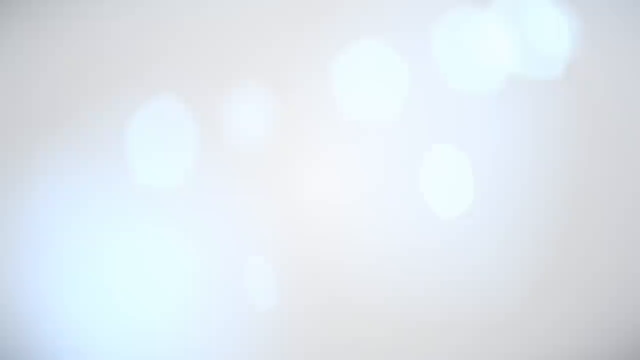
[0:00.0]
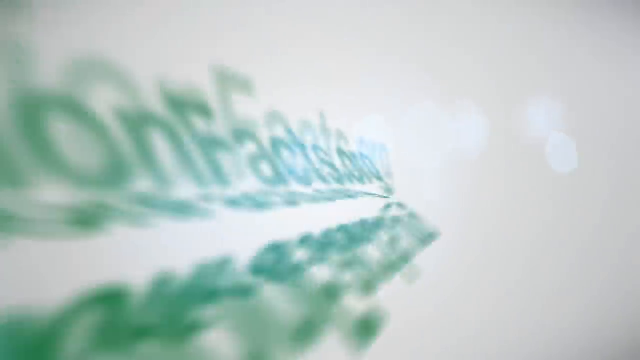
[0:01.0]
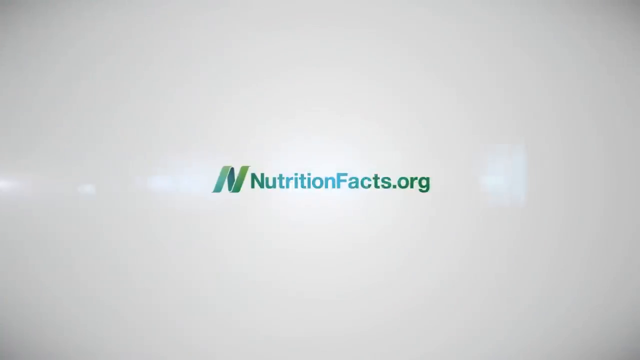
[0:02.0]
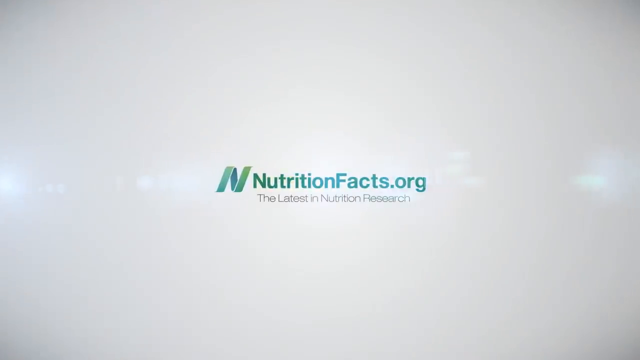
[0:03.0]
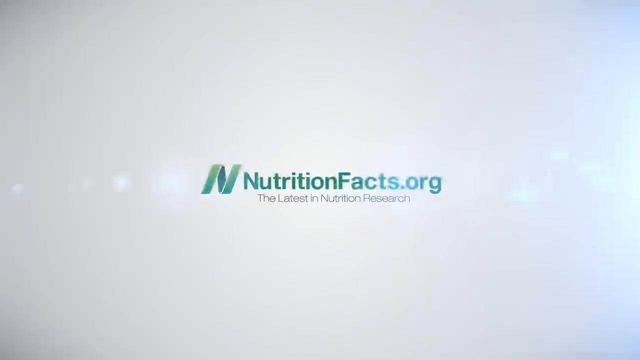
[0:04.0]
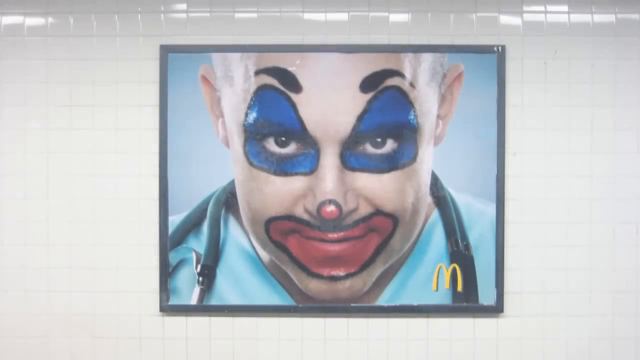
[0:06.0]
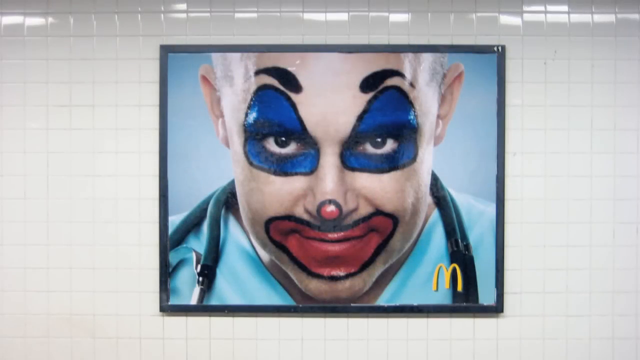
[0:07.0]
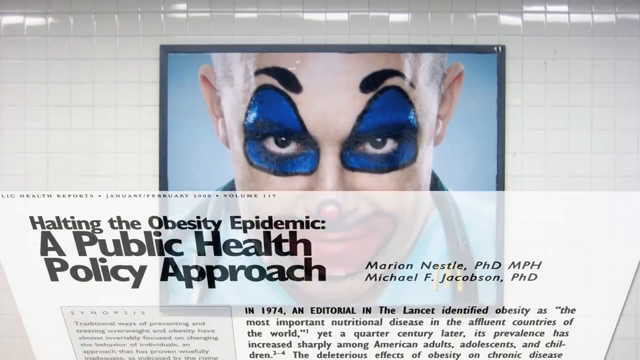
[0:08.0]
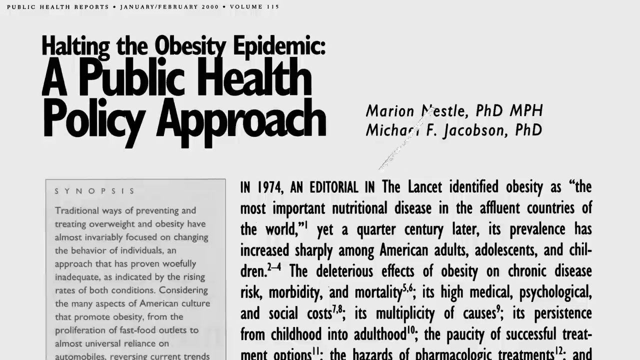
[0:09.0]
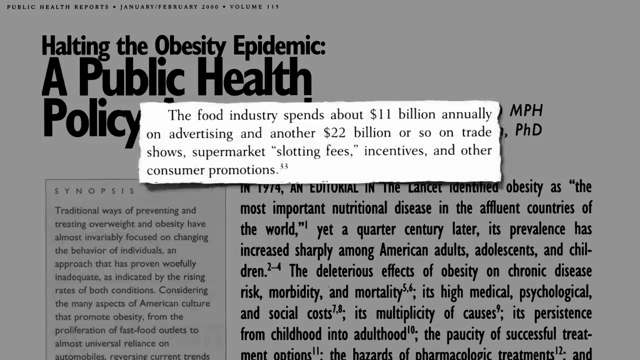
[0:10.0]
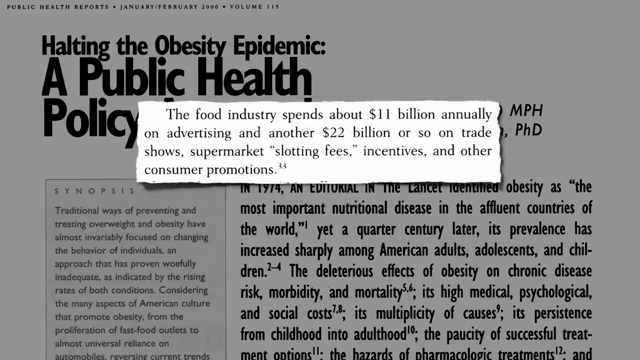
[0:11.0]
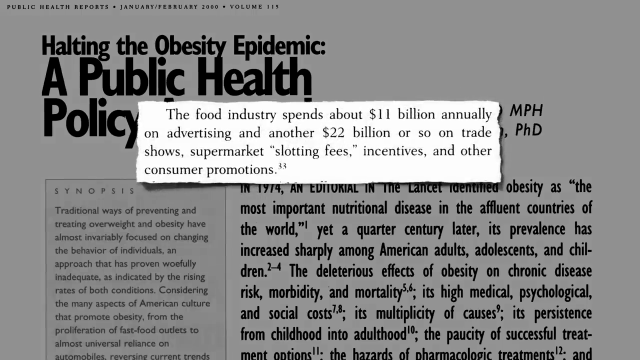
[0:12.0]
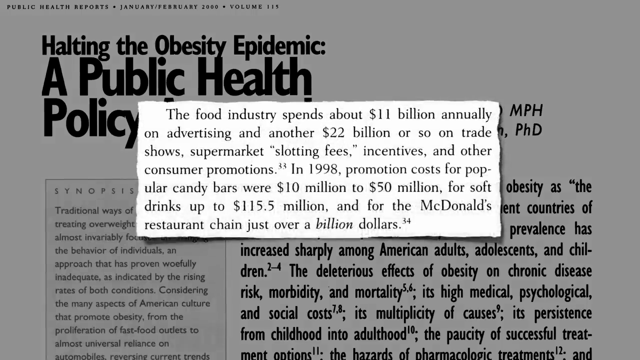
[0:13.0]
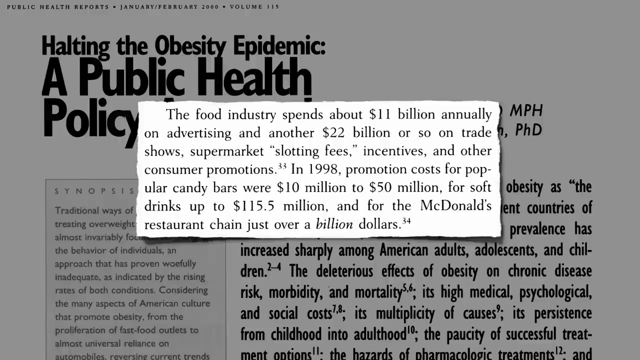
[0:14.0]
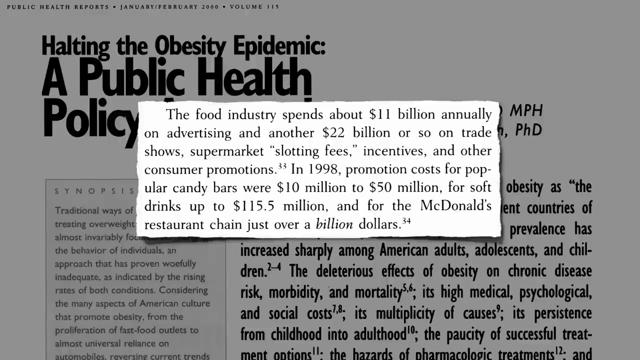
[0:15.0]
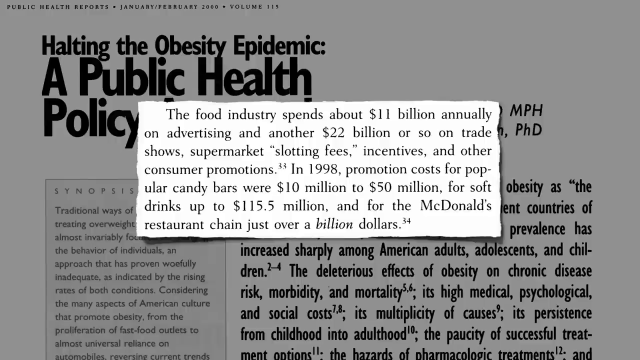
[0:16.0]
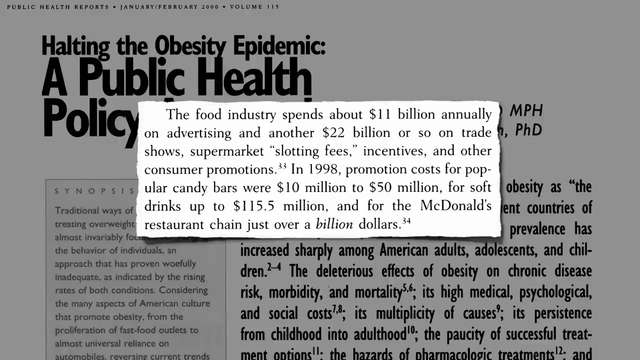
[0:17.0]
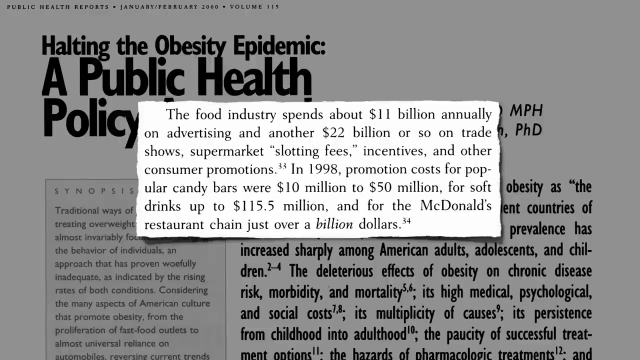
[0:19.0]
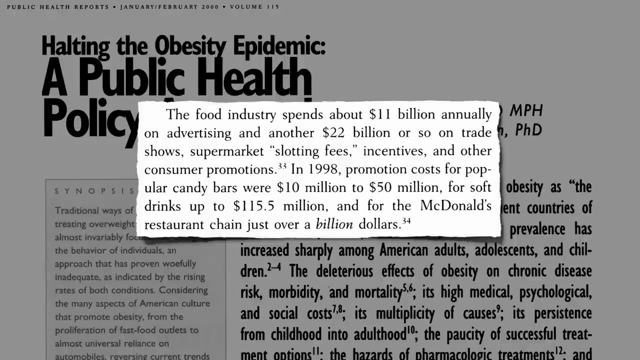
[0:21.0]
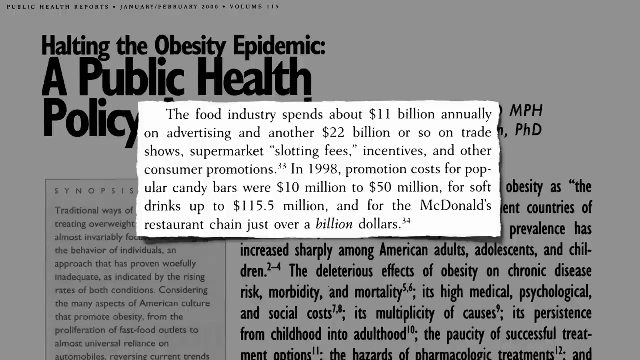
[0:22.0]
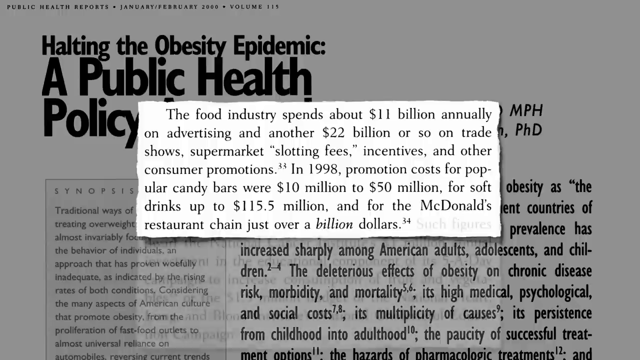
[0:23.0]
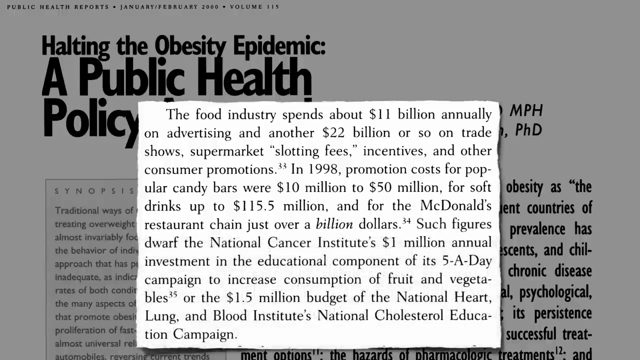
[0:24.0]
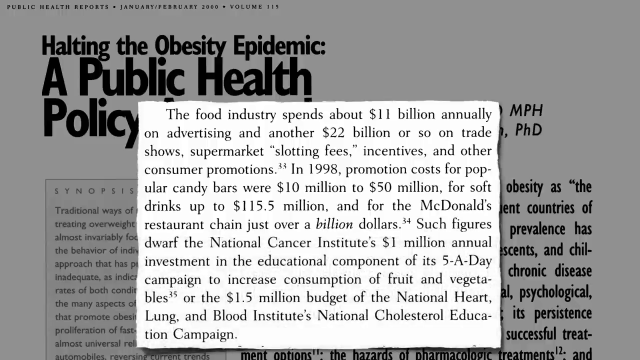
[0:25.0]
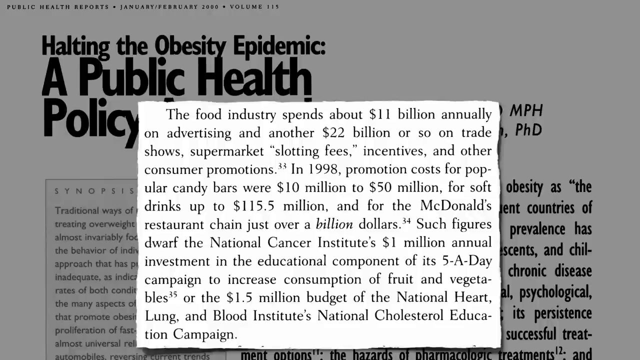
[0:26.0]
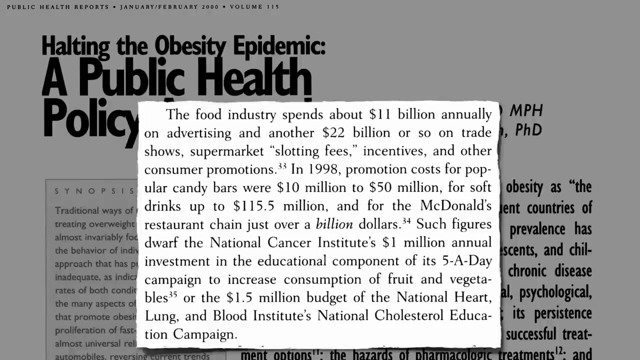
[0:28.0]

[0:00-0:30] The video opens with a nutrition facts logo flipping over and falling into the middle of the screen; it is in green and blue letters and reads "nutritionfacts.org." Next comes a framed image of a man who is apparently a doctor dressed up like the Joker. A black stethoscope is around his neck, he wears a blue doctor shirt, and he has face paint like a clown or like the Joker. A McDonald's symbol is in the bottom right corner of the picture. The picture is in a black frame on a subway tile background. A news article then appears, moving from the bottom to the top of the screen; it is about halting the obesity pandemic and mentions the food industry. In front of the image, a small highlighted cutout comes up, about how the food industry spends $11 billion annually on advertising.